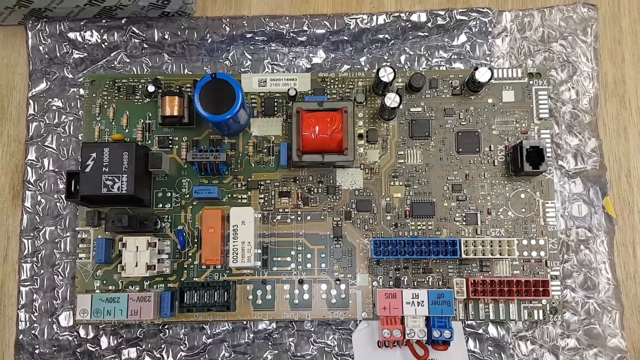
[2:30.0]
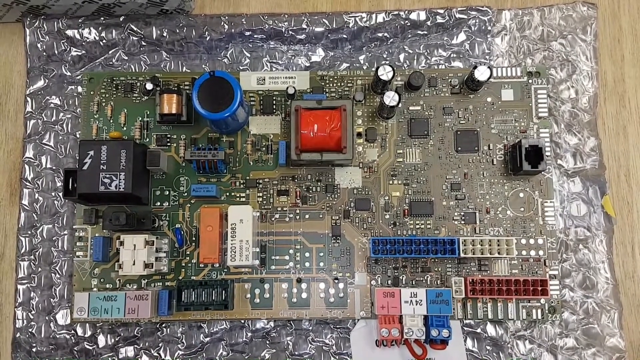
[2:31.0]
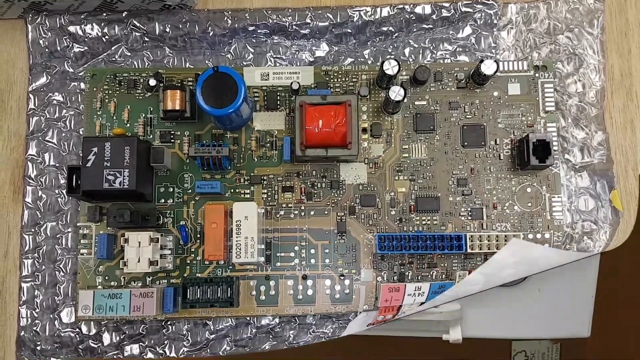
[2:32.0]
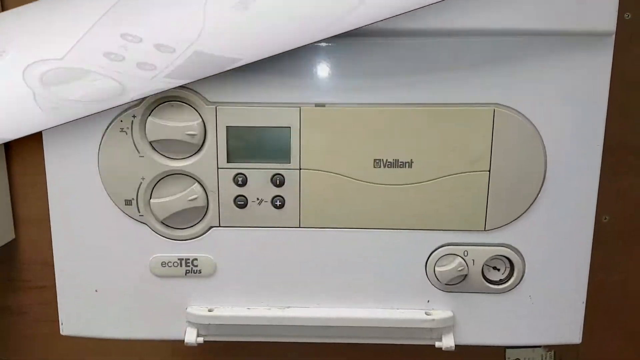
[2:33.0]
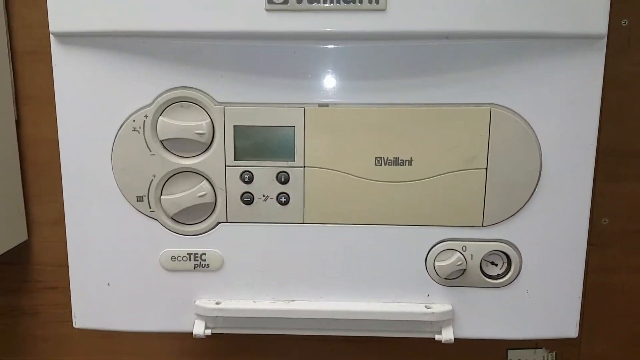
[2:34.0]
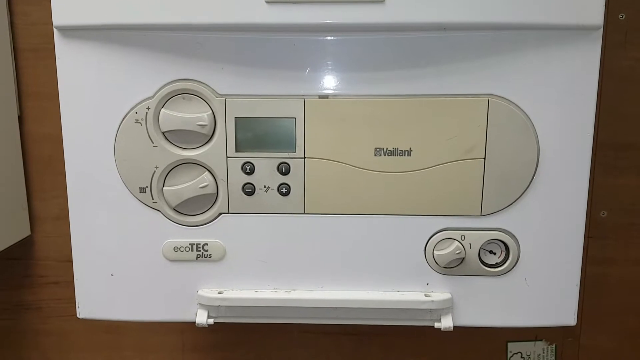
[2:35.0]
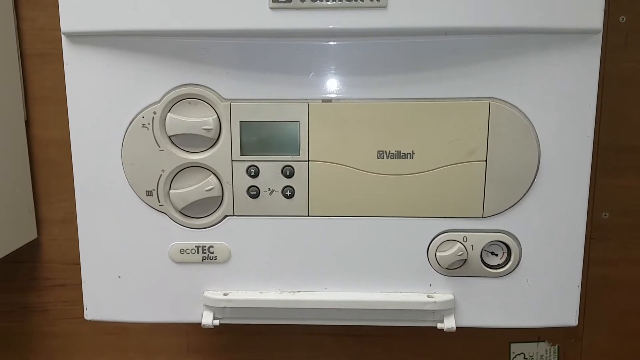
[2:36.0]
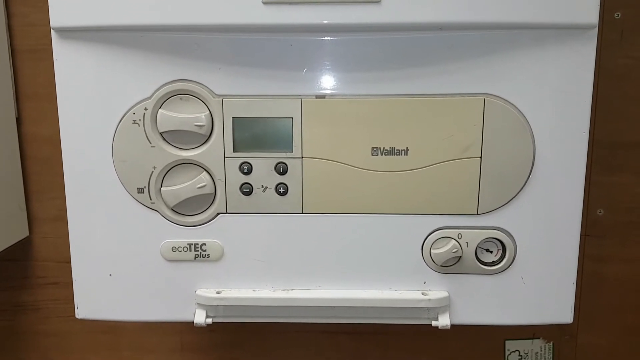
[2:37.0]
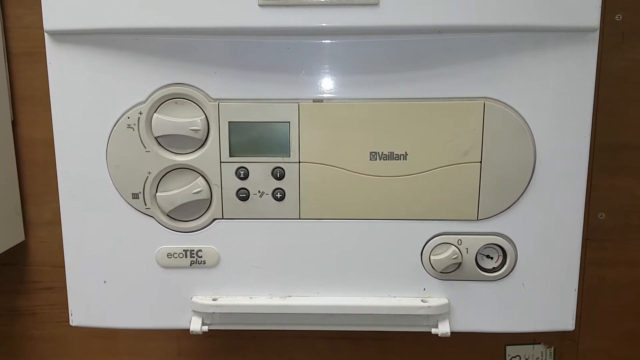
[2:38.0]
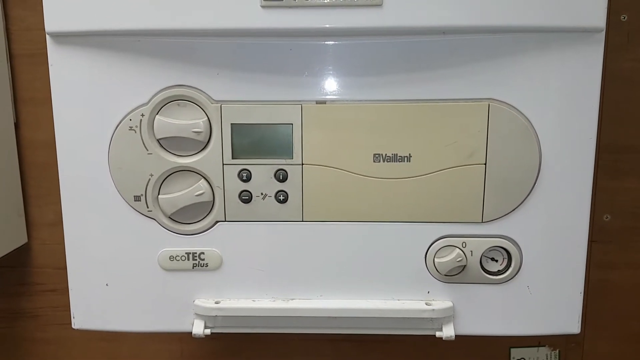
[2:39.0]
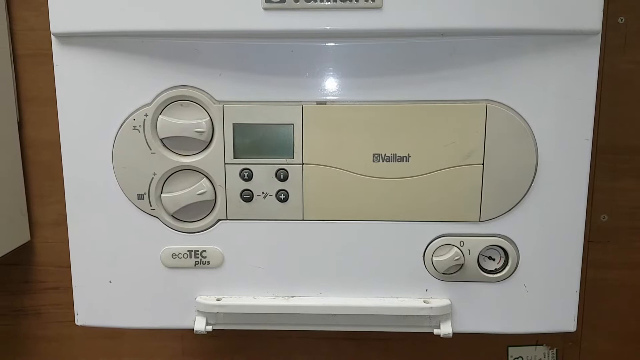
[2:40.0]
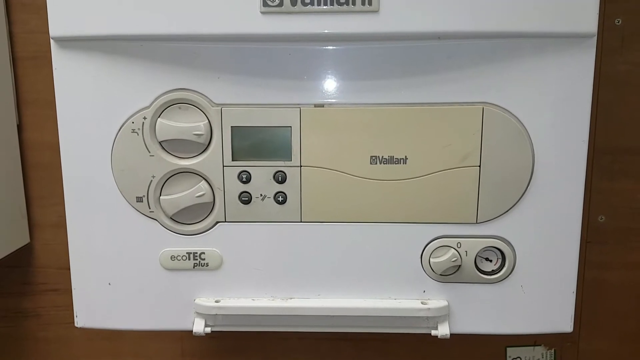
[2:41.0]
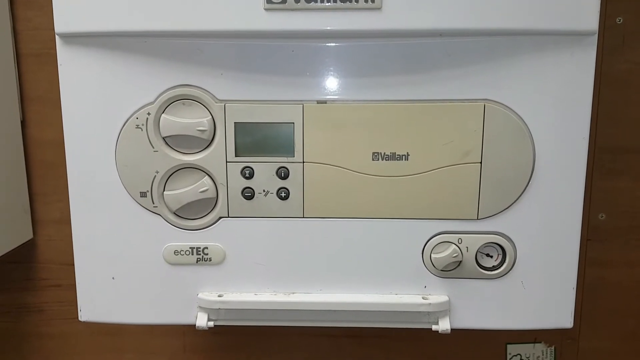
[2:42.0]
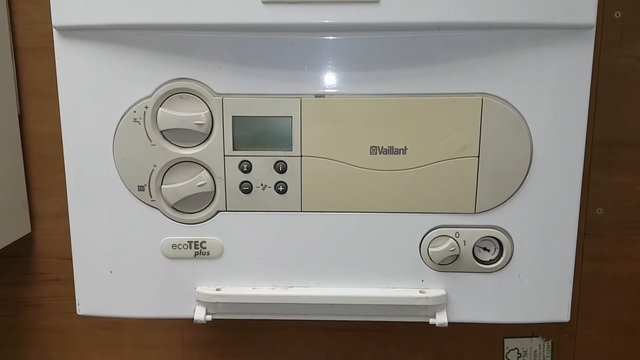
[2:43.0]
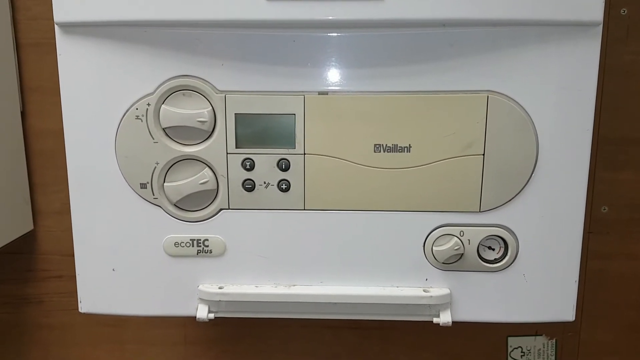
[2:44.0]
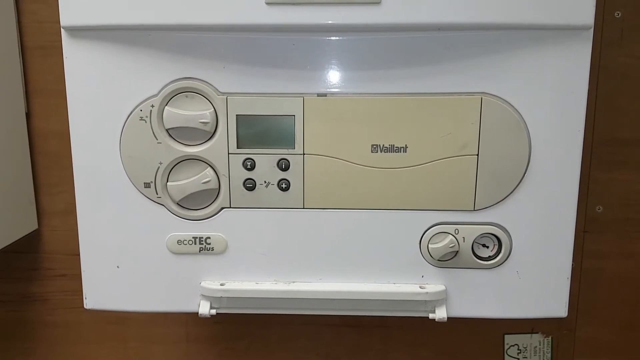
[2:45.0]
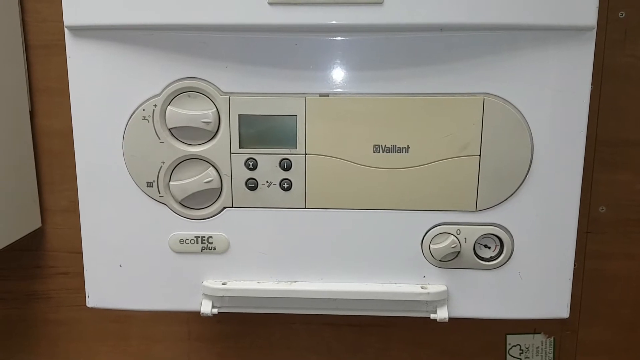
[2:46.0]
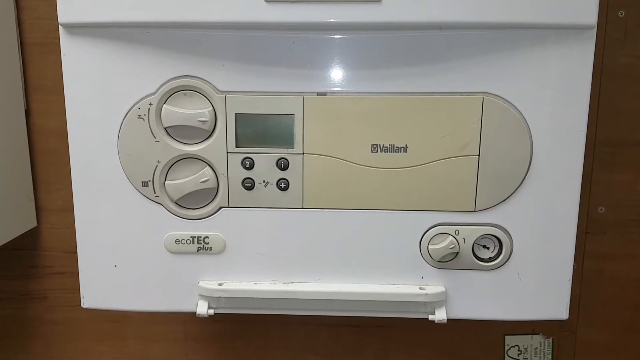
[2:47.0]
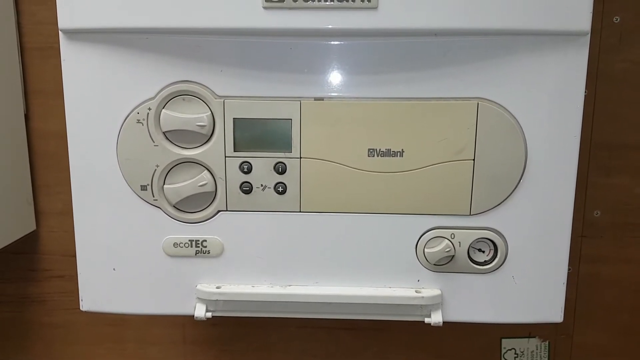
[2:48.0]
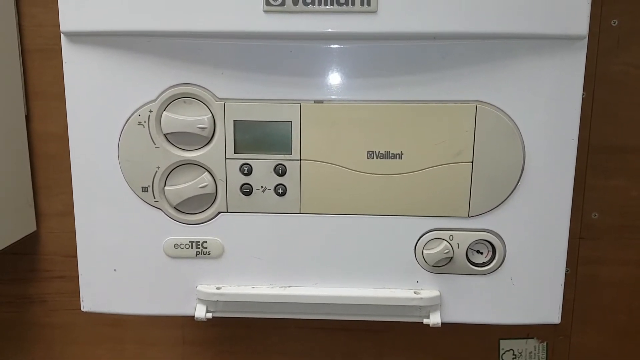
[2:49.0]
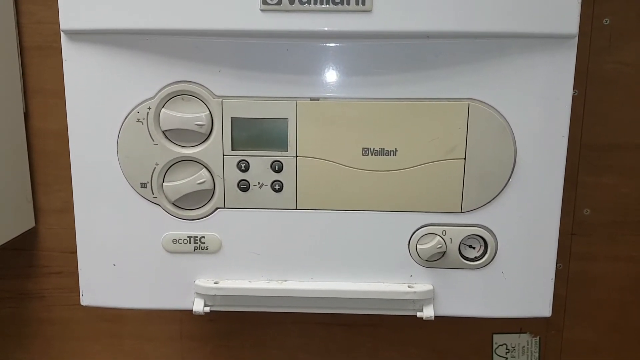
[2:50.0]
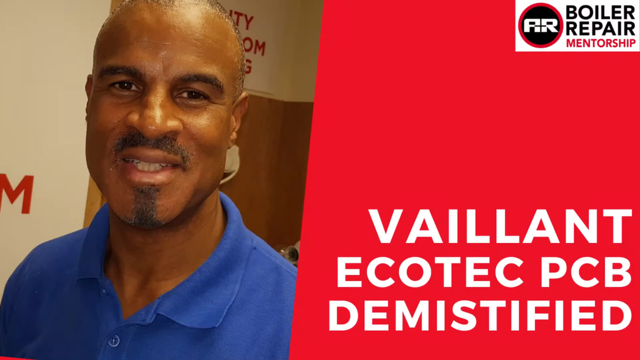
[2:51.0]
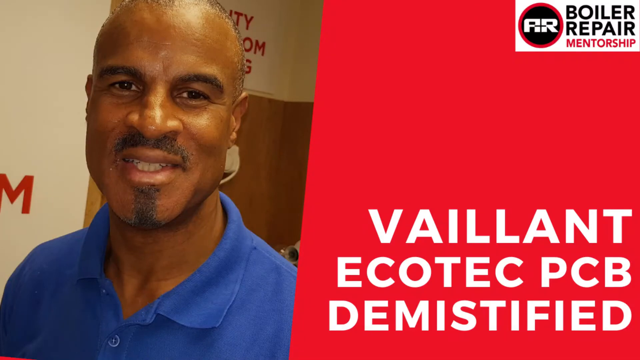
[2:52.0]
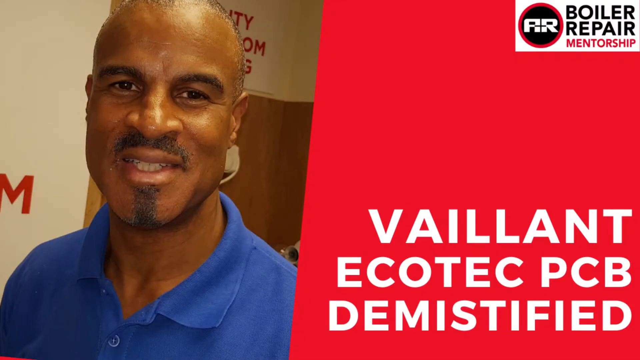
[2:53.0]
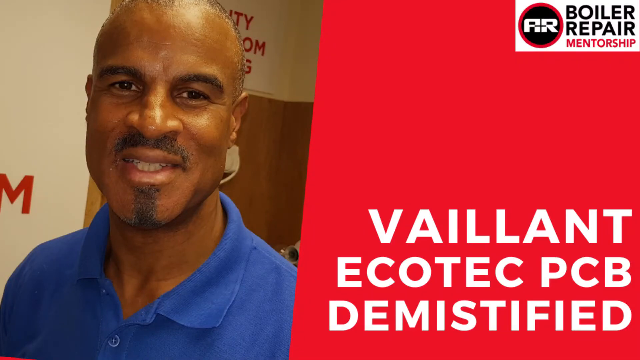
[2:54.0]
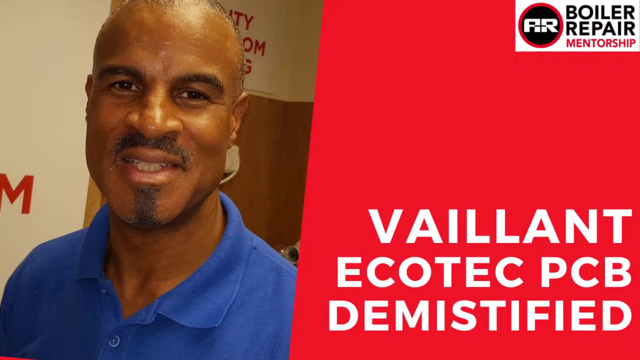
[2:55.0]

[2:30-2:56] The second circuit board is peeled back, and the entire Vaillant unit is shown, presumably with one or possibly both circuit boards in it. It looks like an air conditioning unit of some sort, where turning one of its two knobs possibly adjusts the temperature. It says "Ecotech Plus." The device seems to be a very old one.